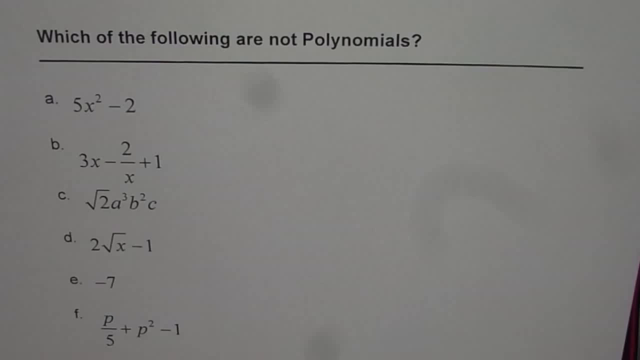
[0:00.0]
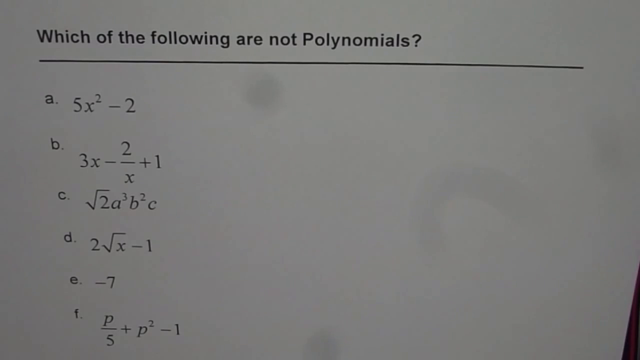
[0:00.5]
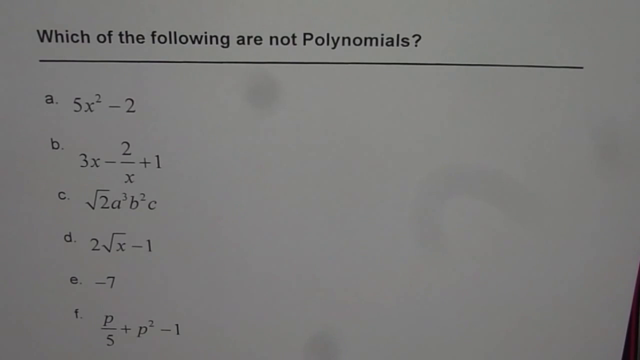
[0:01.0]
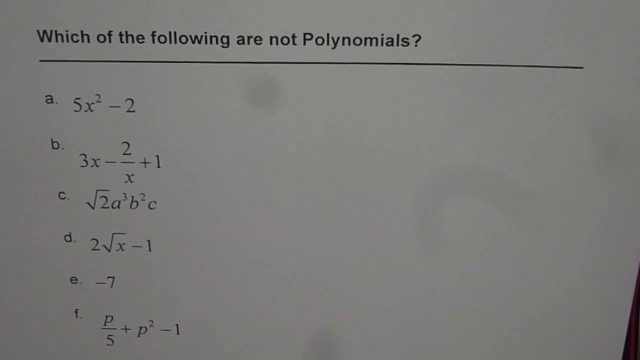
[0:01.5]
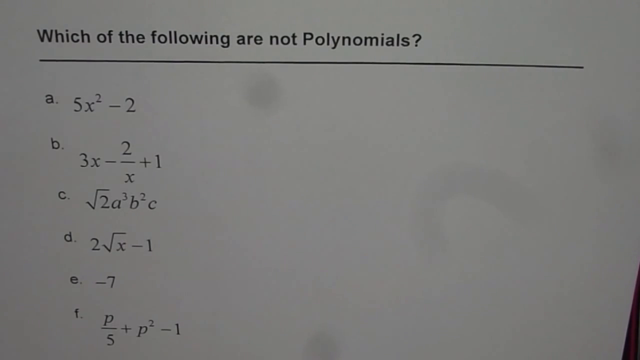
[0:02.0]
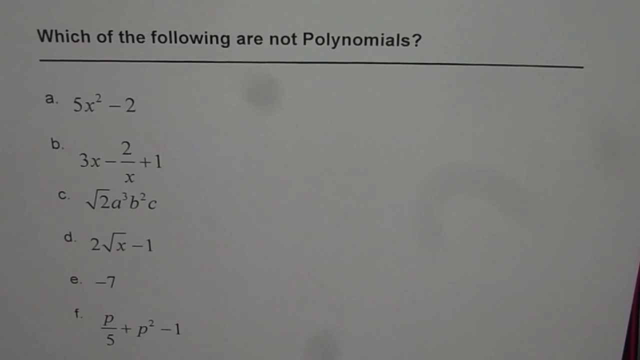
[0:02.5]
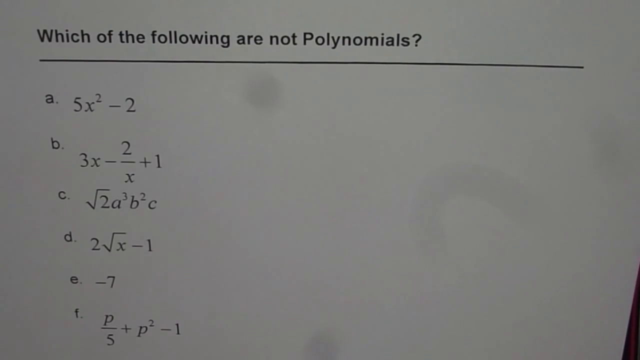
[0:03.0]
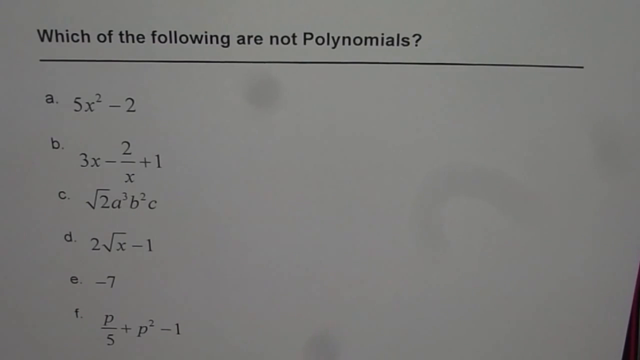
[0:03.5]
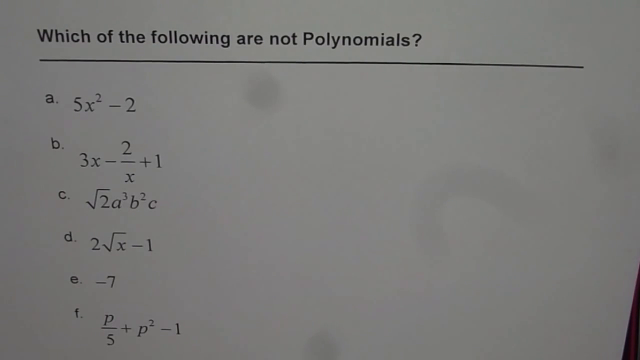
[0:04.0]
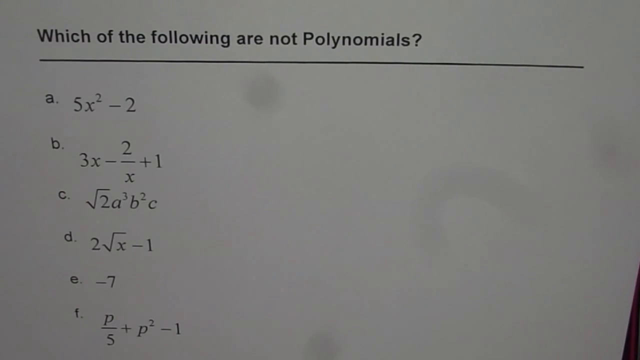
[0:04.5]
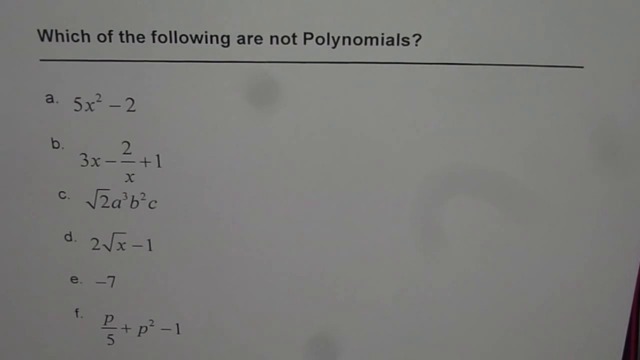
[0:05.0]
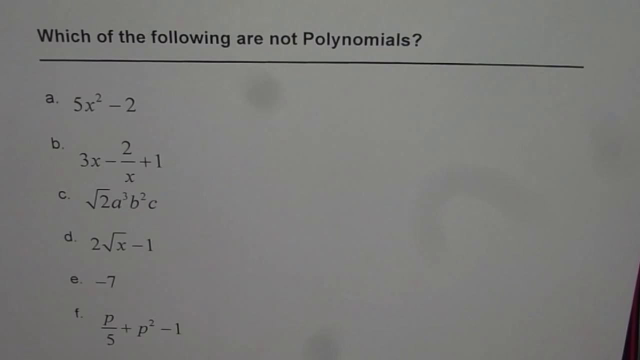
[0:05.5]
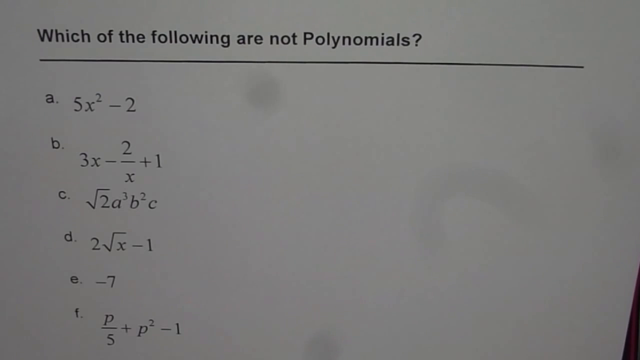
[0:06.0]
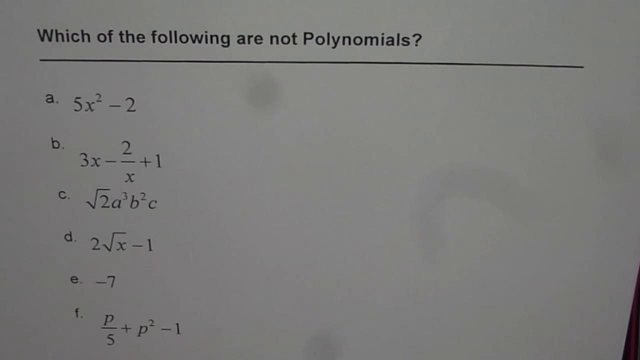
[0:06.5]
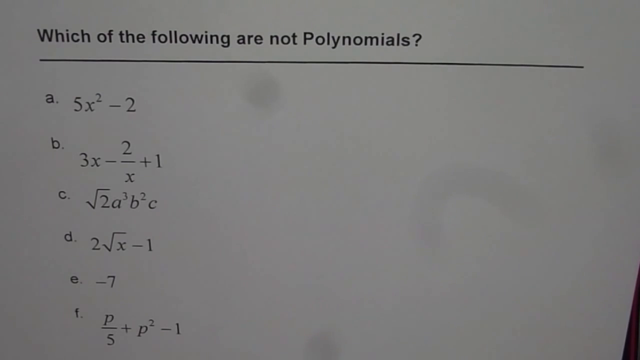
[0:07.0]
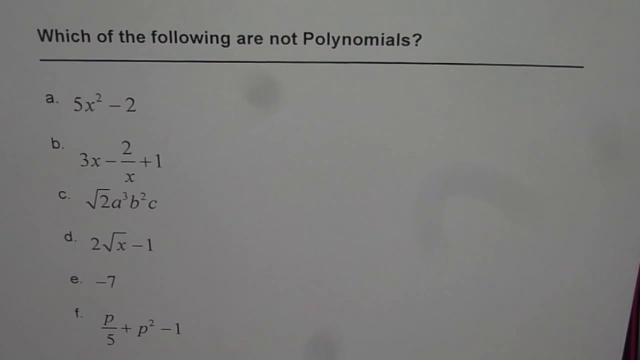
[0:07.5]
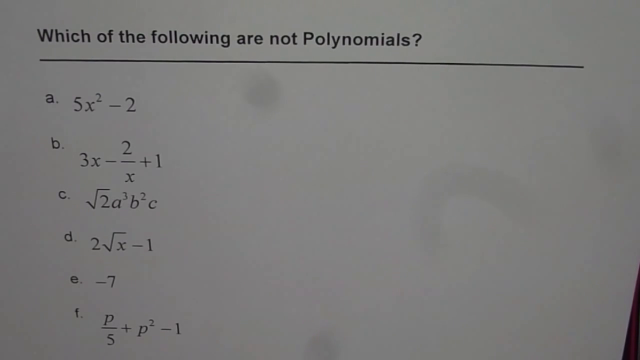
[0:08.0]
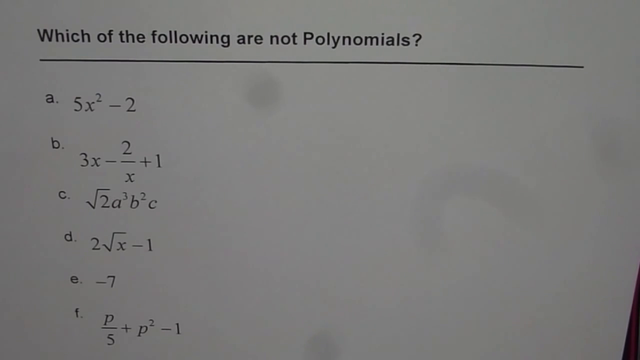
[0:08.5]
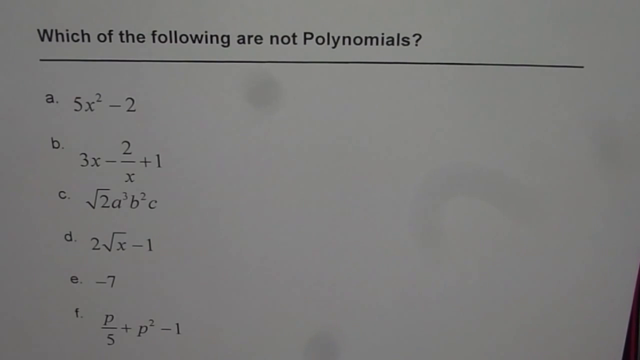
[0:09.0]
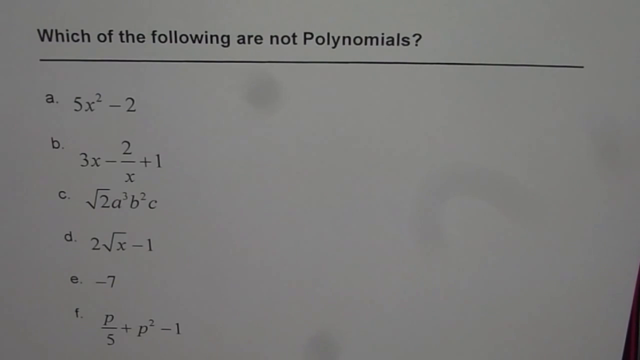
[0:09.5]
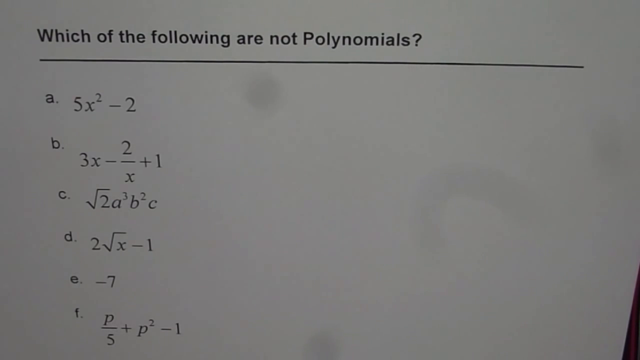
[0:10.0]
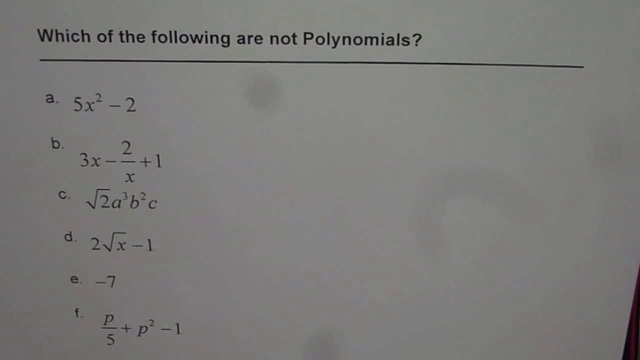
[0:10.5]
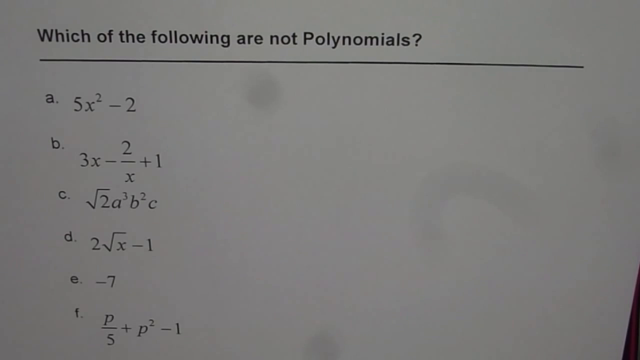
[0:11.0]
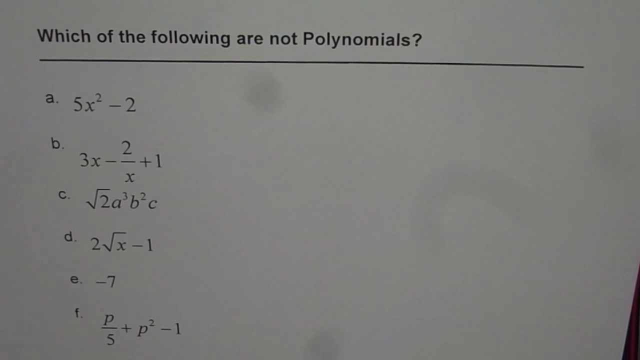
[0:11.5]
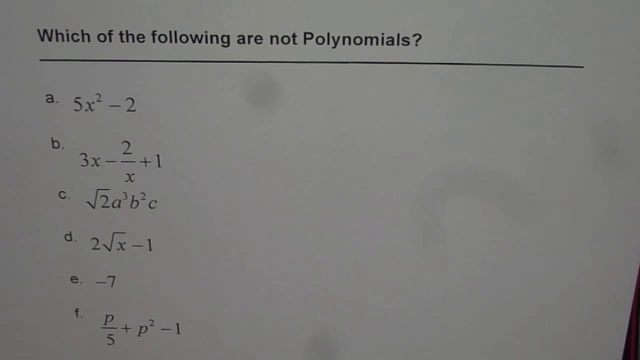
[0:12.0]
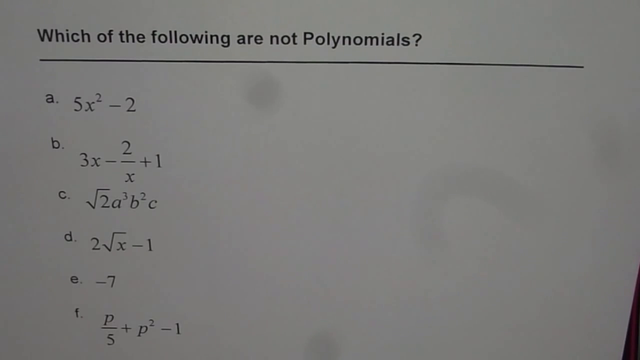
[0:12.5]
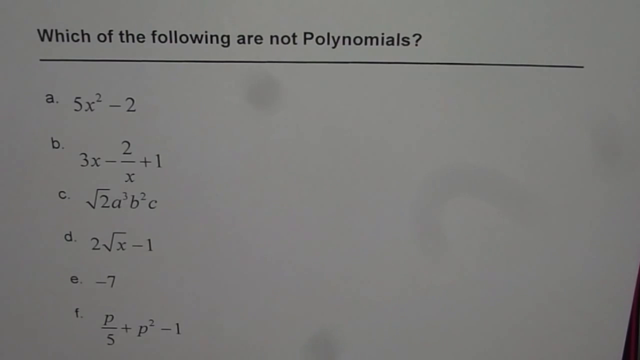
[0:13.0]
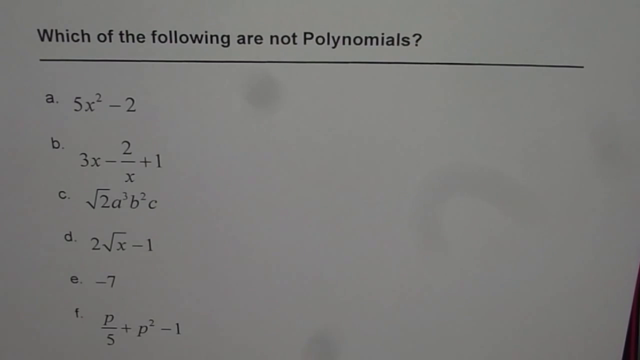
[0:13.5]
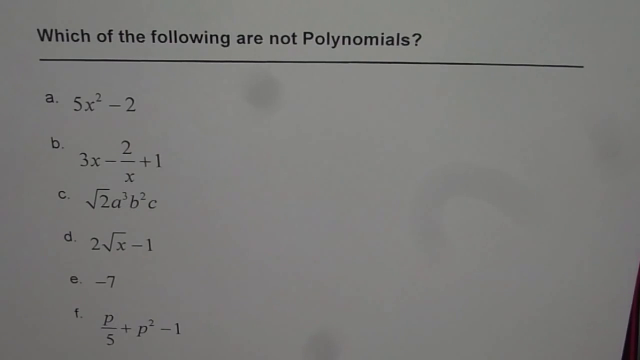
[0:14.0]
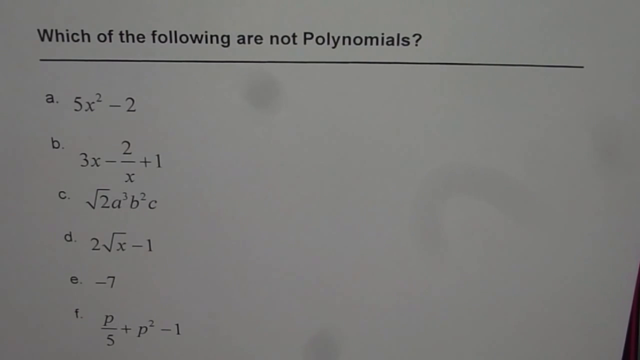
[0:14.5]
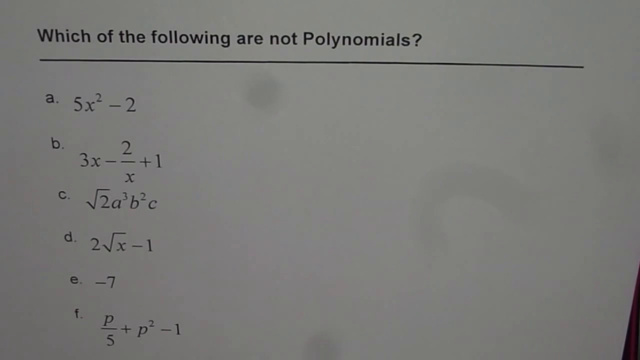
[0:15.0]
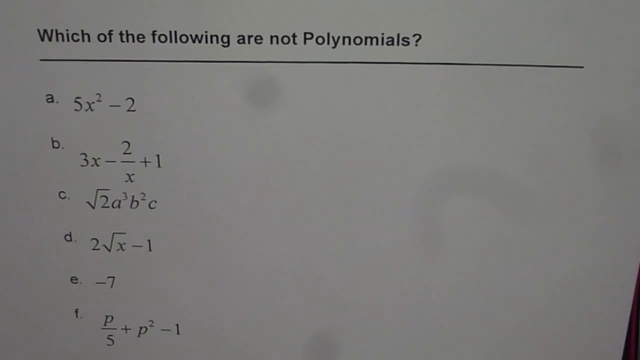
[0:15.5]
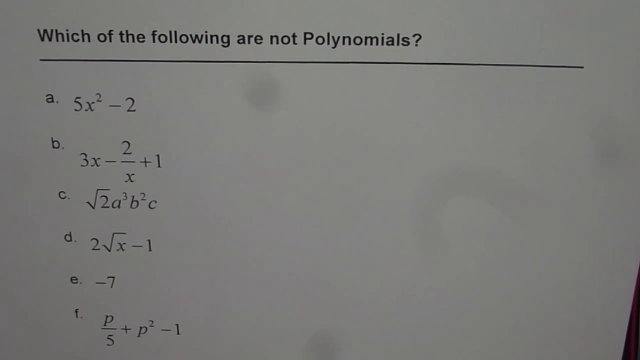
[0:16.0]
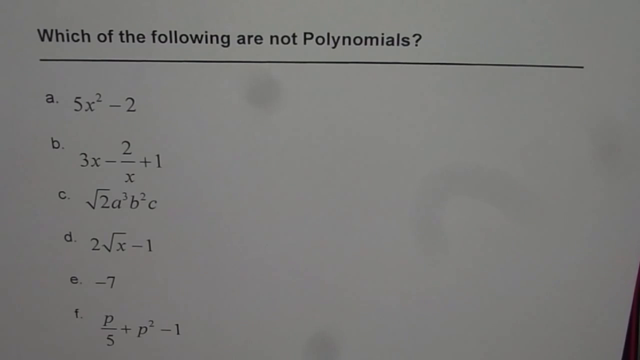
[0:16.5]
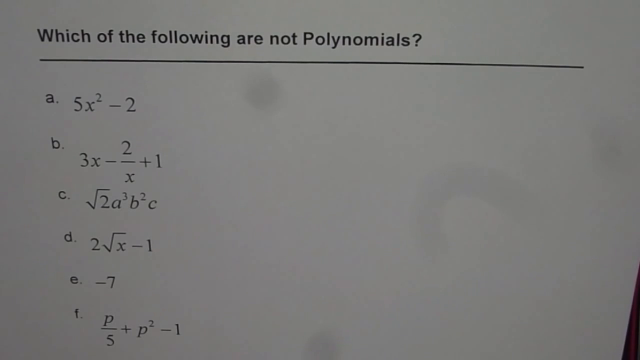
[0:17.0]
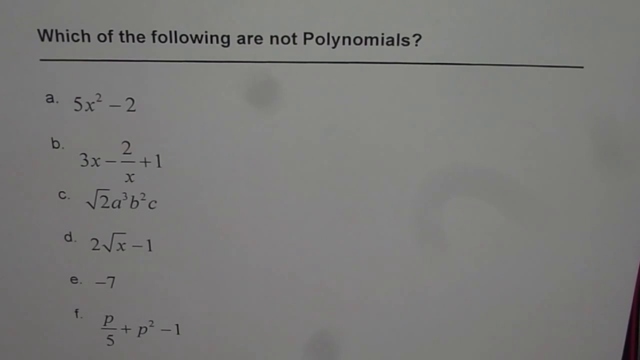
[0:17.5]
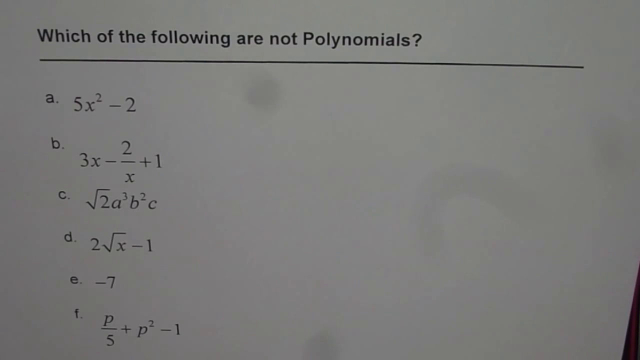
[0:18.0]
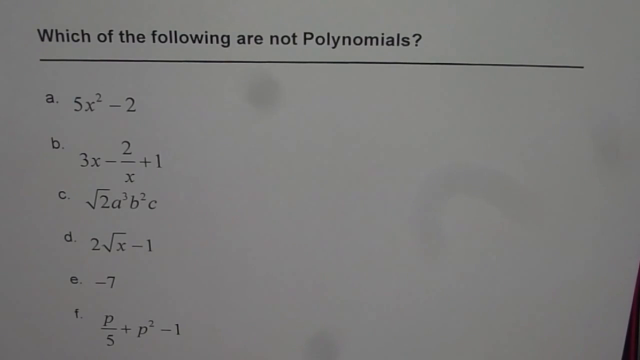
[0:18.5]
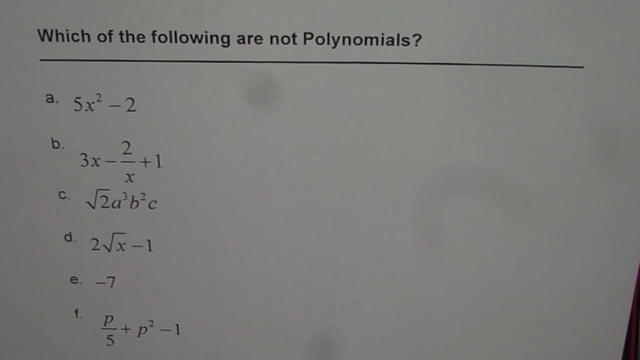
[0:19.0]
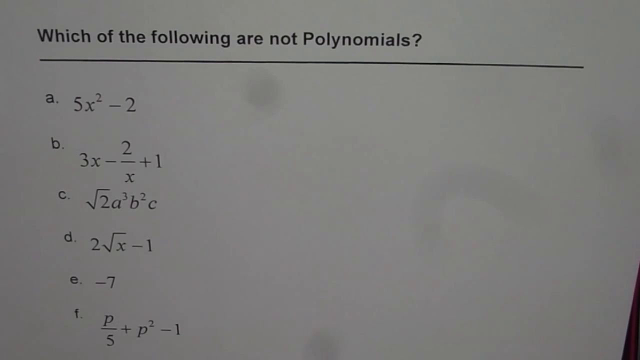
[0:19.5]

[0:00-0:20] On a white background, bold black lettering across the top, set a little in from the left and a little down from the top, reads "which of the following are not polynomials". A black line runs from under the heading over toward the right side, ending about an inch from the right edge. Beneath it is a list of expressions: a, 5x squared minus 2; b, 3x minus 2 over x plus 1; c, the square root of 2a to the 3rd power b to the 2nd power c; d, 2 square root of x minus 1; e, negative 7; and finally f, p over 5 plus p to the 2nd power minus 1.